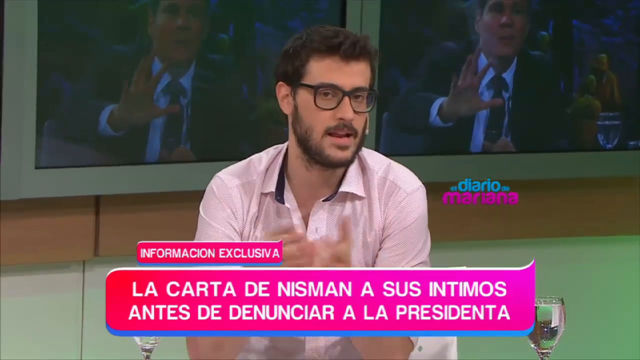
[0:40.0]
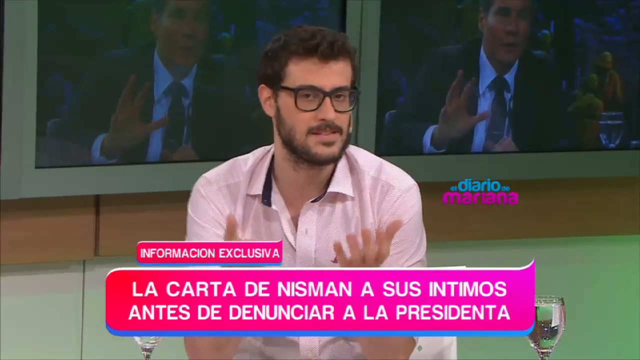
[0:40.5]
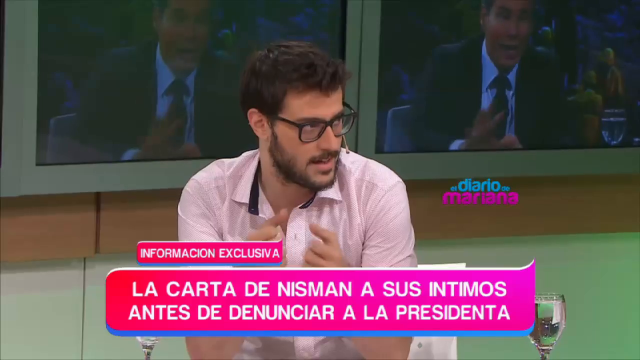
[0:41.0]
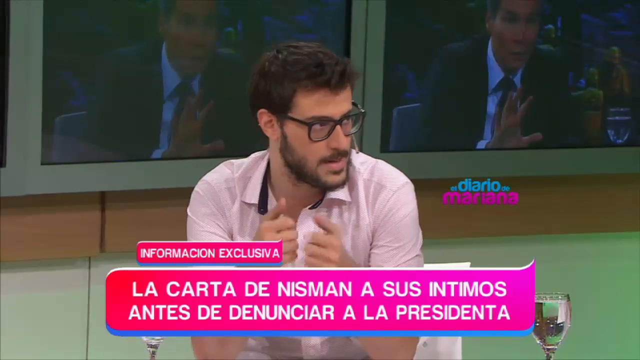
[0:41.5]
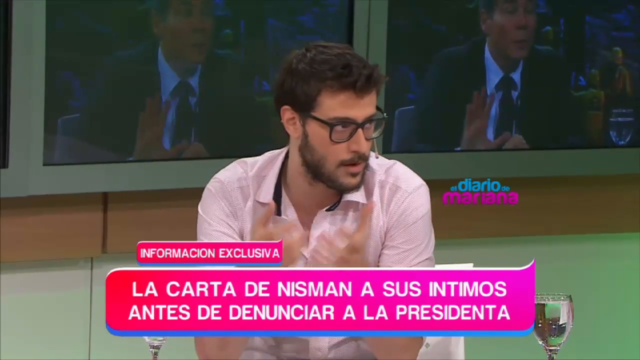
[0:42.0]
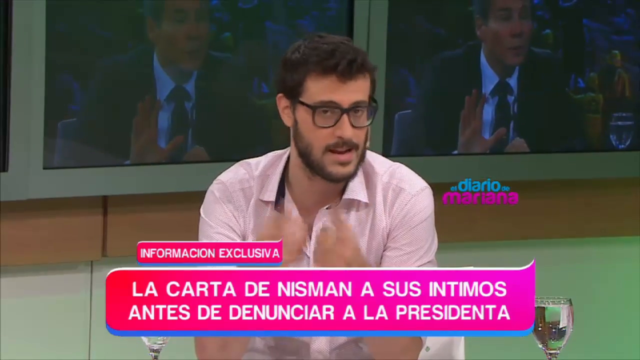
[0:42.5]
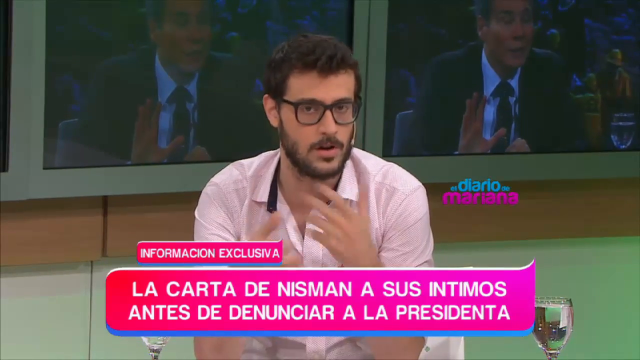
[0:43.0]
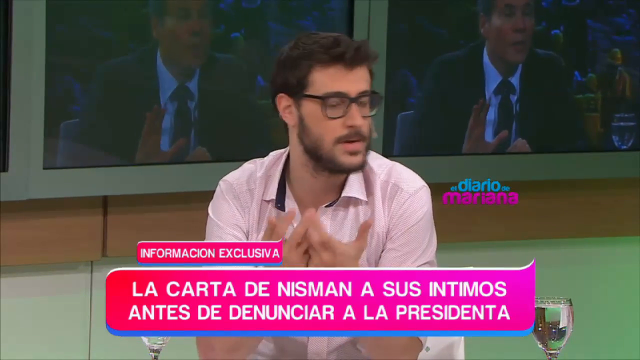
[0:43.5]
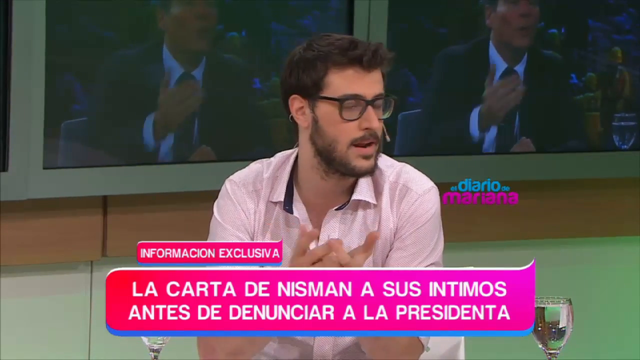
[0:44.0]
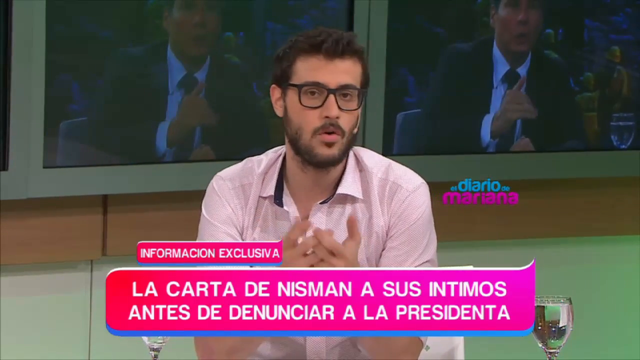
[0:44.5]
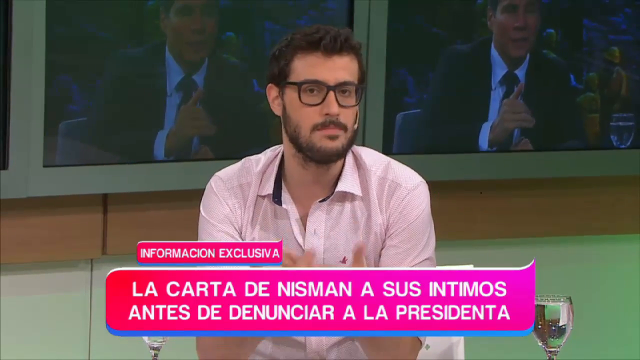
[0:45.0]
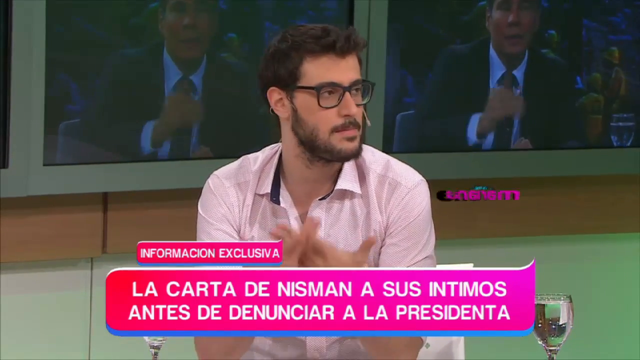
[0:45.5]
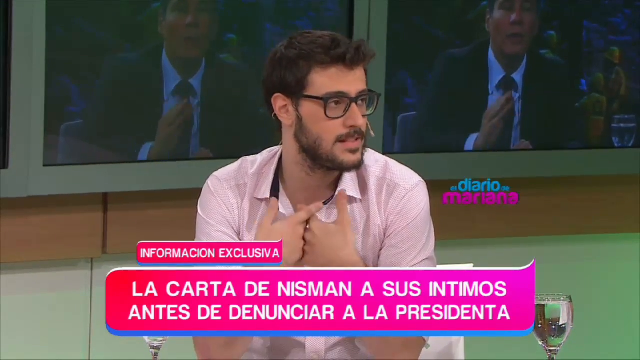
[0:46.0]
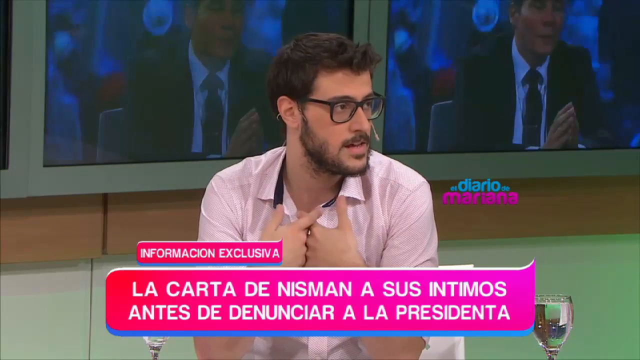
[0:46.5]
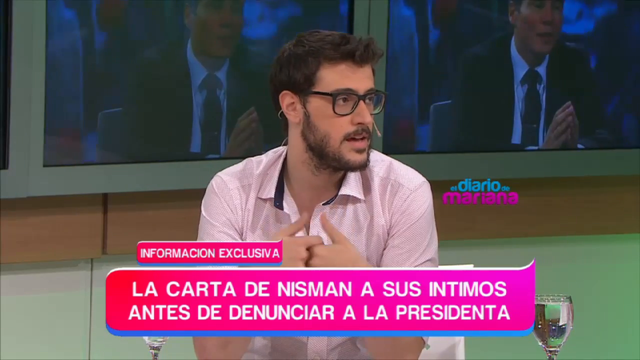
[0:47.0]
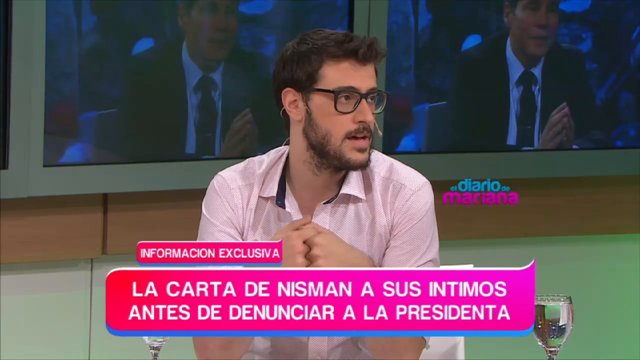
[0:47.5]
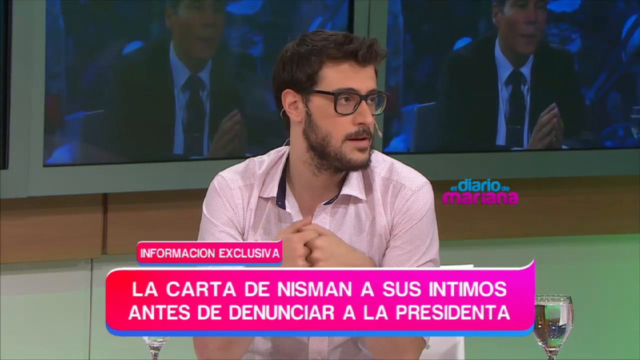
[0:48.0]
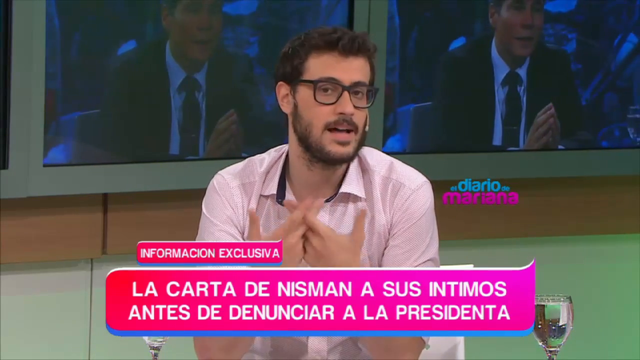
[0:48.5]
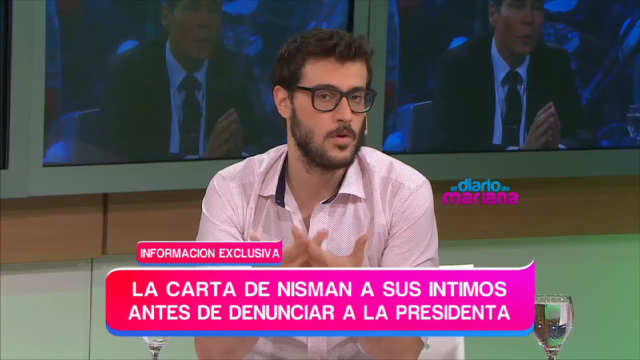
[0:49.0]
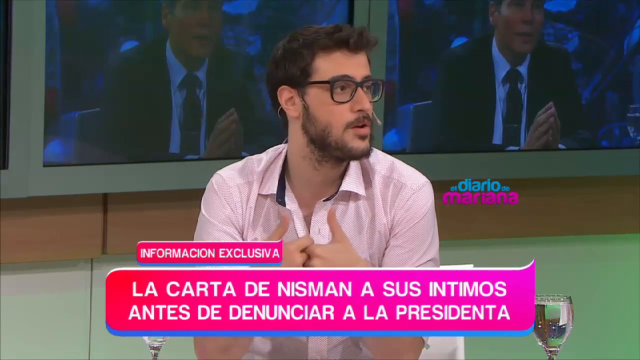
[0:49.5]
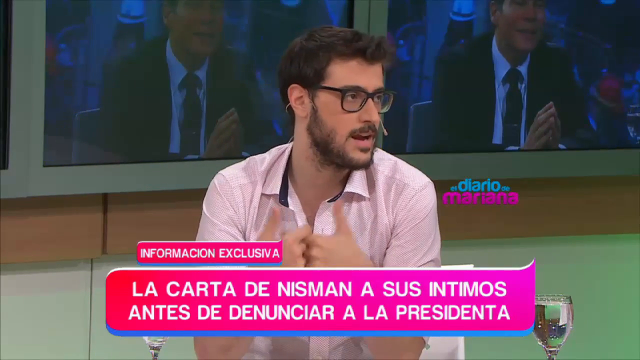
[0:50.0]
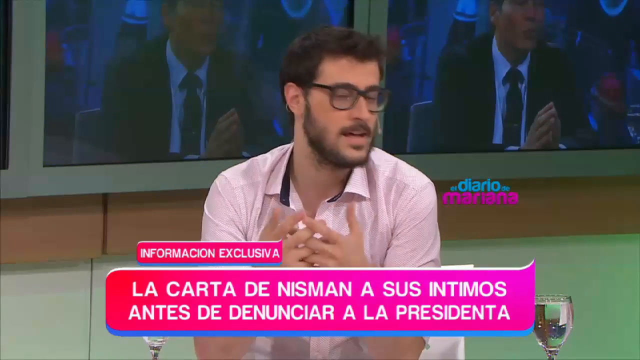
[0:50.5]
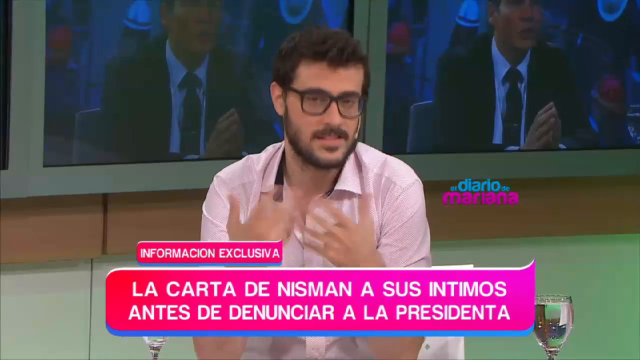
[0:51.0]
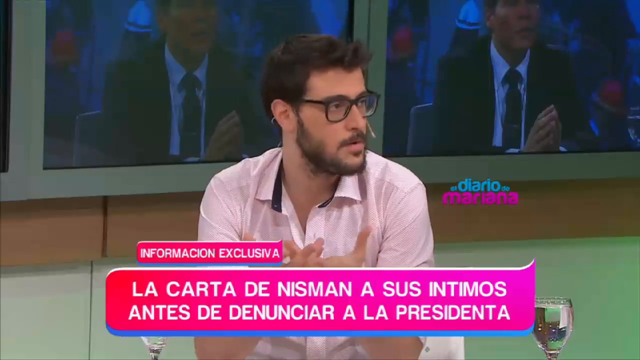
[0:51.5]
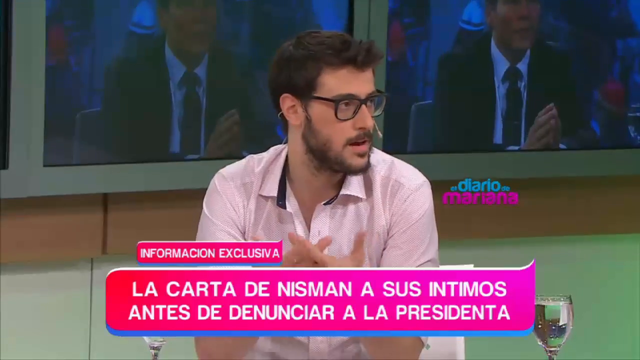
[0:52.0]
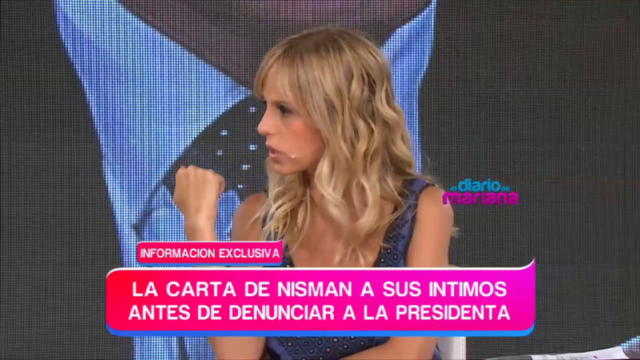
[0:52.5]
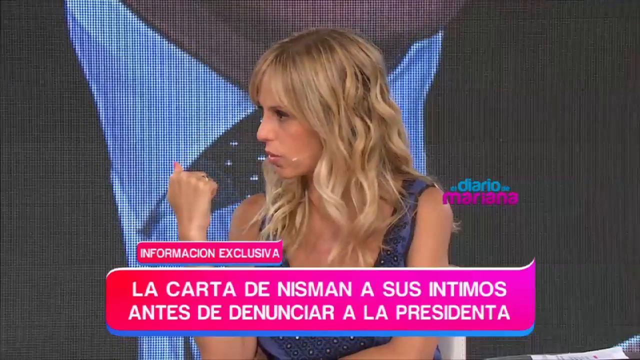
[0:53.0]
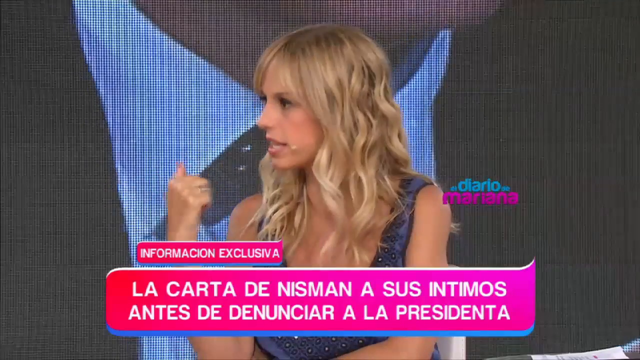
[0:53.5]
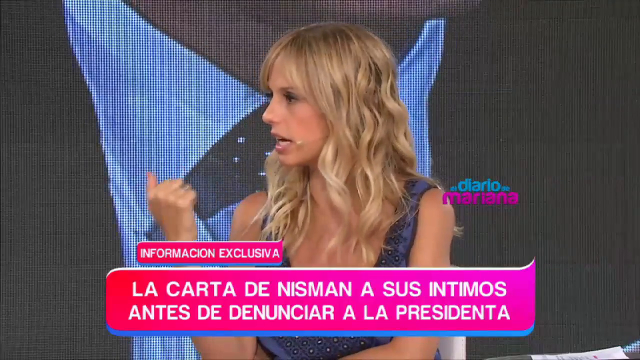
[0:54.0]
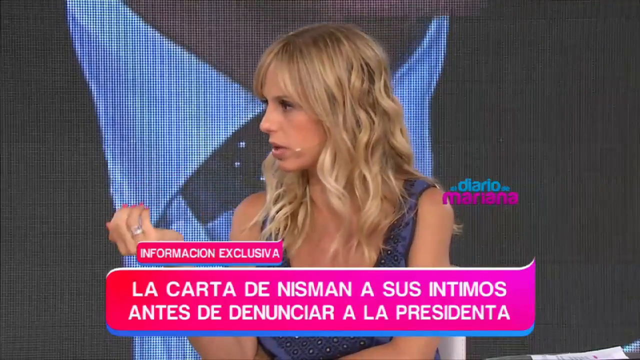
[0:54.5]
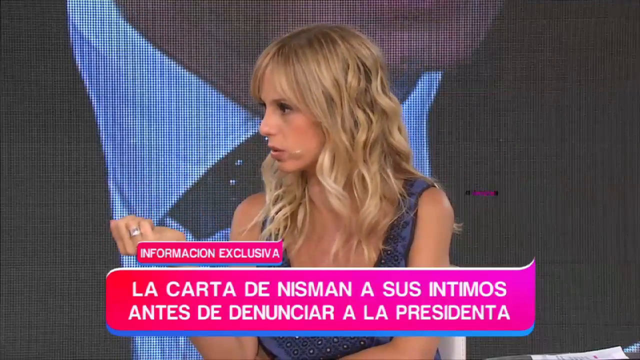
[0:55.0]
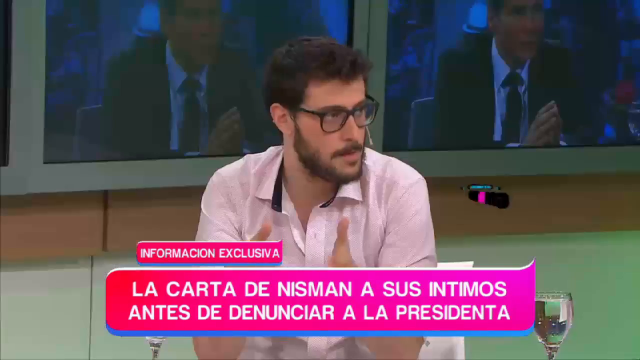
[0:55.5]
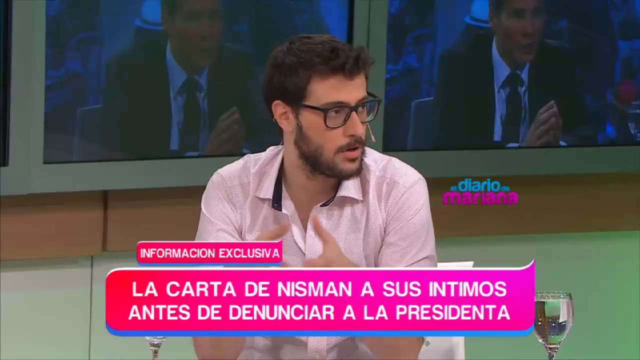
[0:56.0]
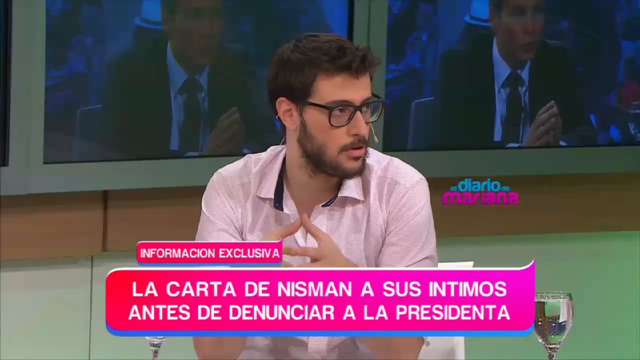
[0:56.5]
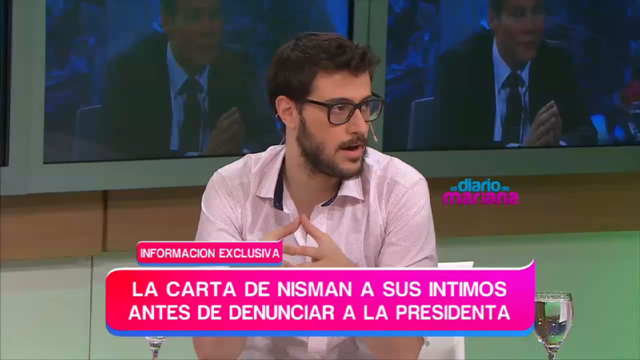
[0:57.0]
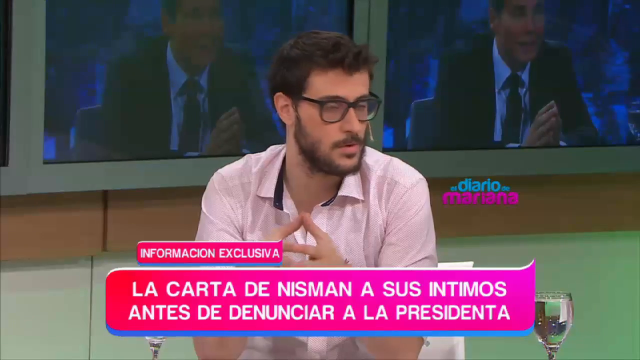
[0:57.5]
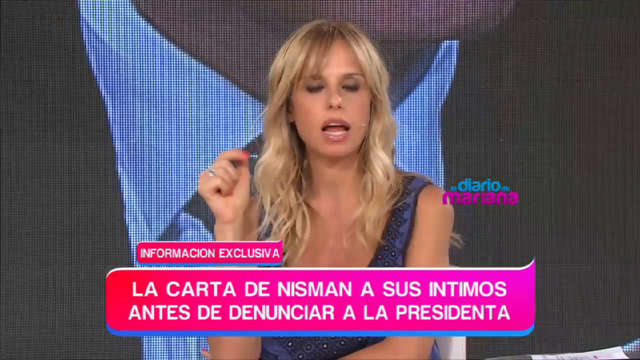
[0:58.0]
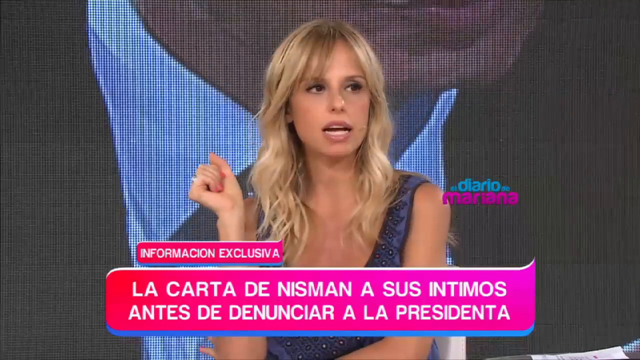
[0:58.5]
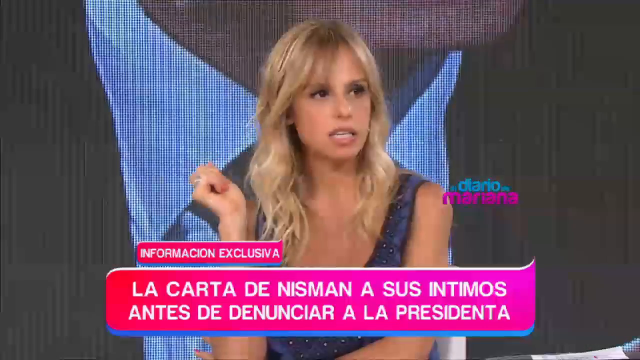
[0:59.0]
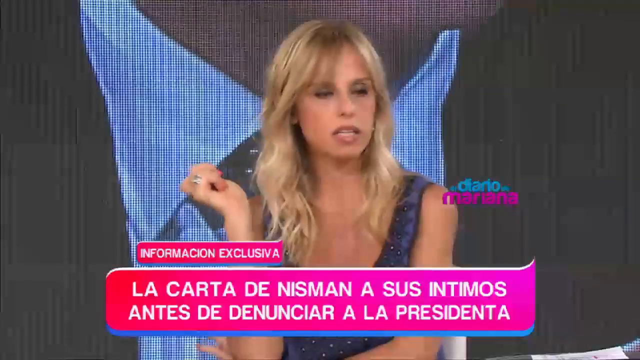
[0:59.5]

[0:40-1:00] The man talks while looking to the right side, moving his hands around a lot. He repeatedly alternates between glancing at the camera for brief moments and looking over to the right to talk to his partner. The scene then changes to the blonde woman looking to the left, talking to the man, her partner, with her right hand raised and her fist closed. The scene changes back to the man, who looks to the right as he talks to his partner. The view then shifts back to the woman, who looks to the right, toward the audience, her right hand still raised and still closed.